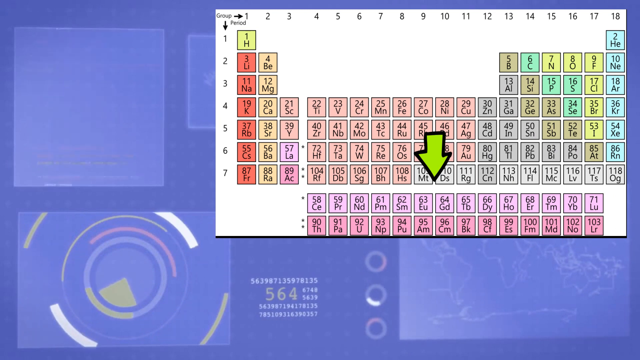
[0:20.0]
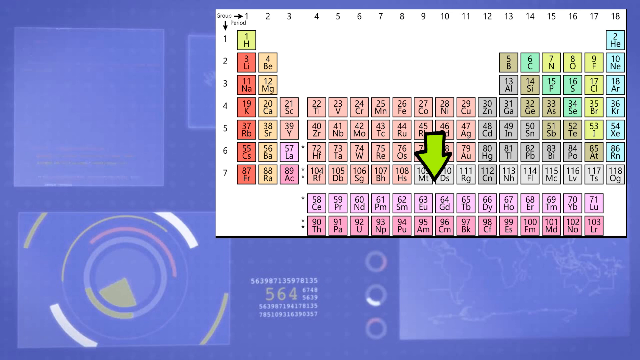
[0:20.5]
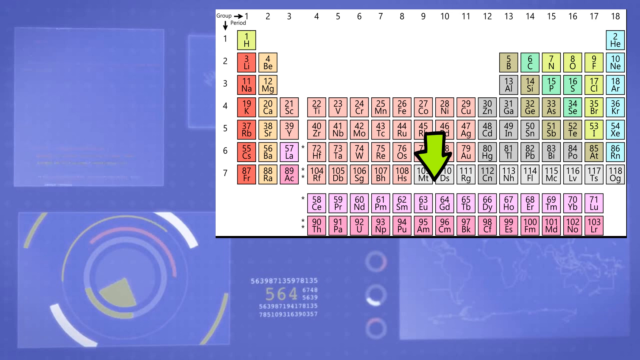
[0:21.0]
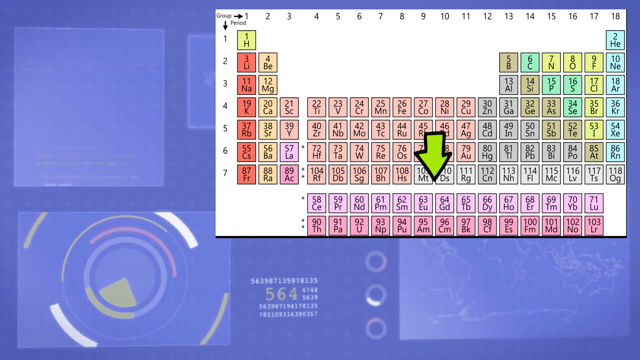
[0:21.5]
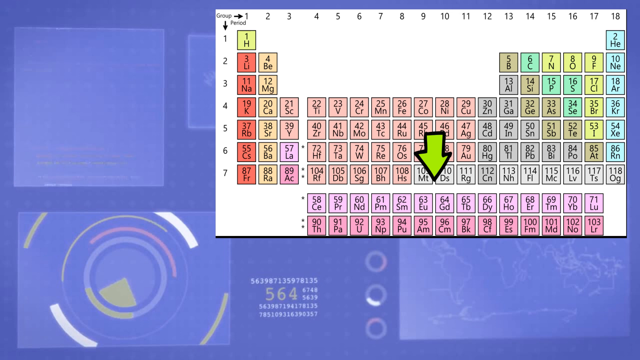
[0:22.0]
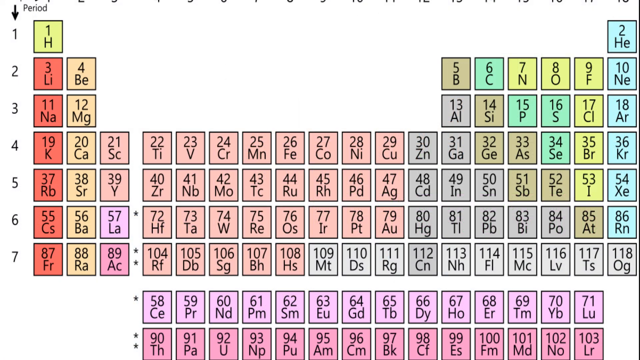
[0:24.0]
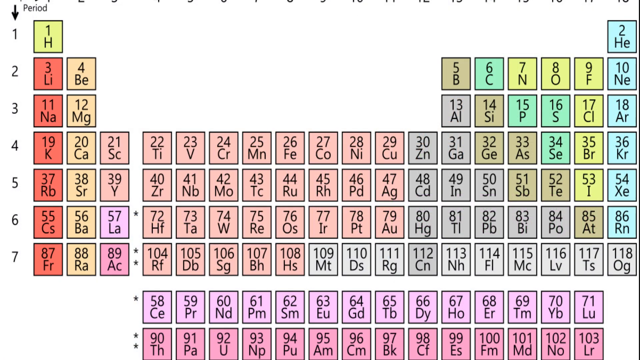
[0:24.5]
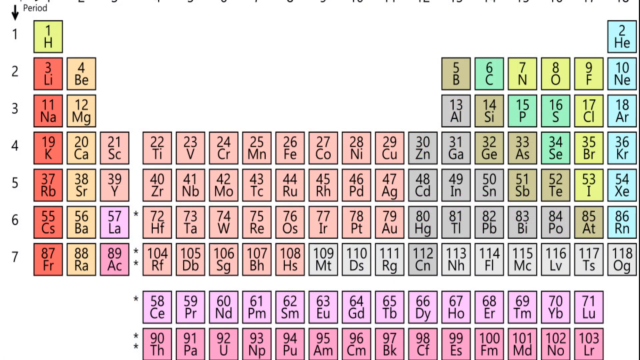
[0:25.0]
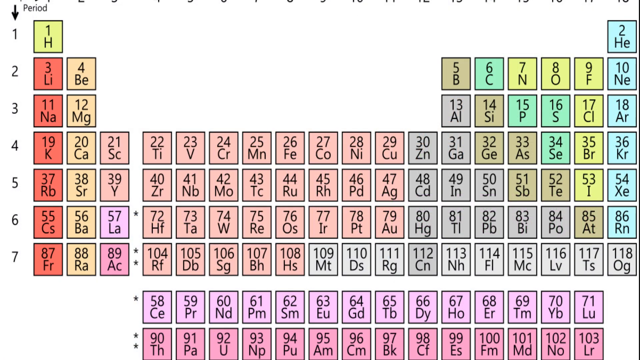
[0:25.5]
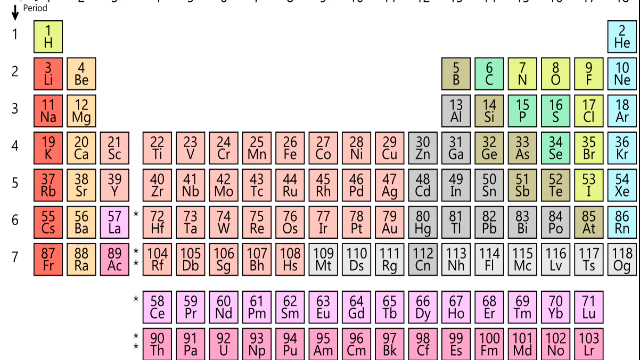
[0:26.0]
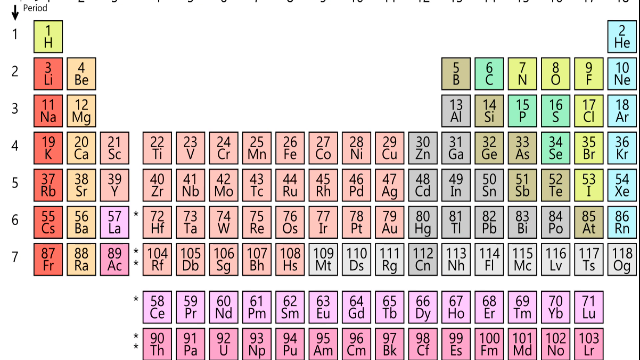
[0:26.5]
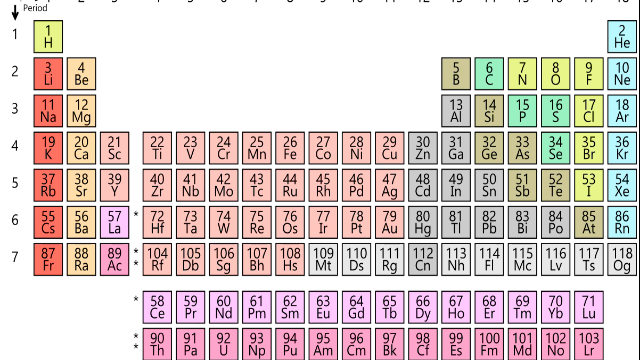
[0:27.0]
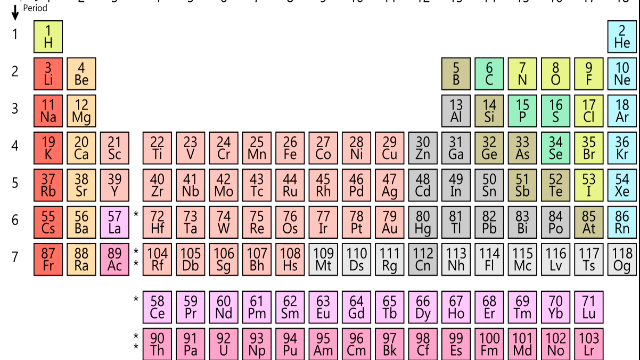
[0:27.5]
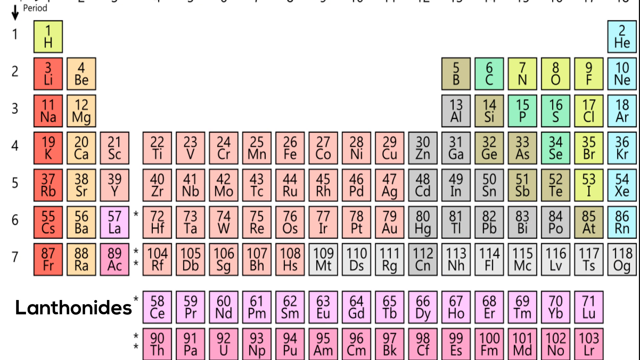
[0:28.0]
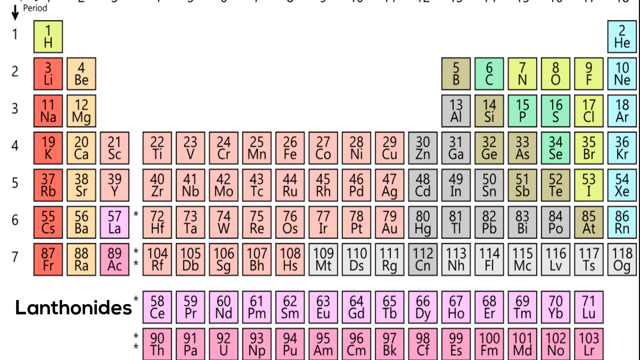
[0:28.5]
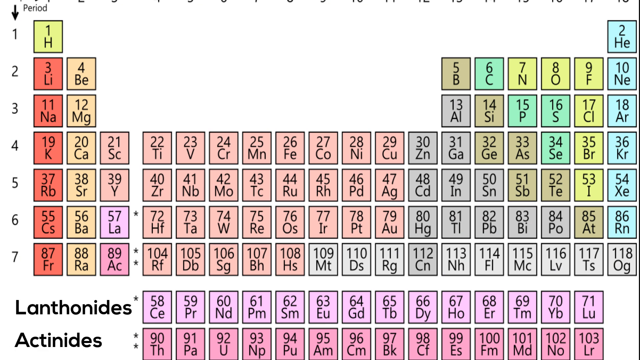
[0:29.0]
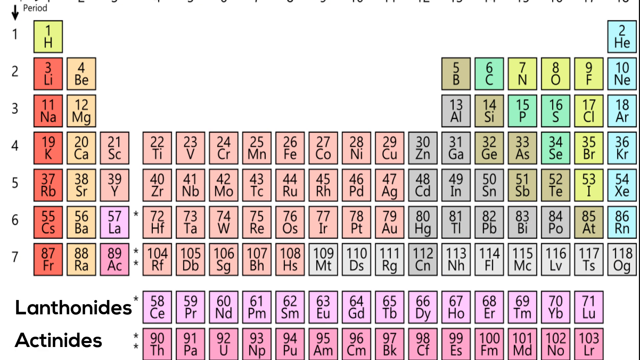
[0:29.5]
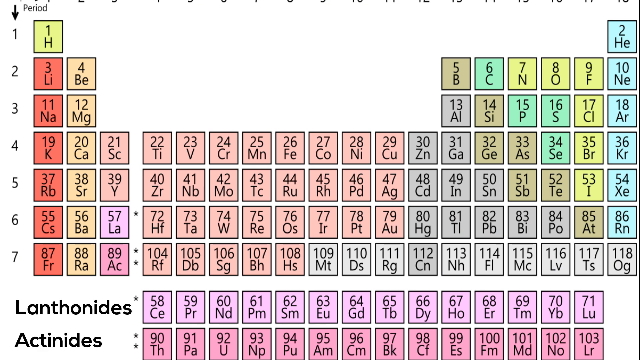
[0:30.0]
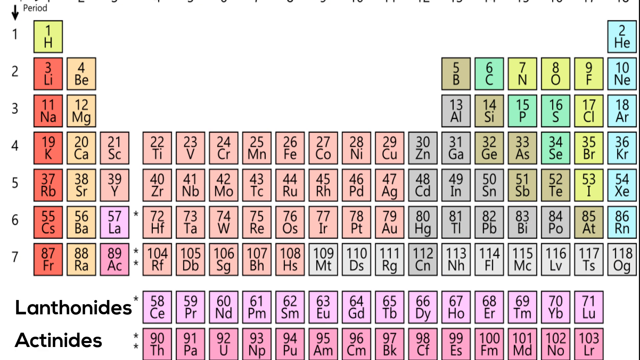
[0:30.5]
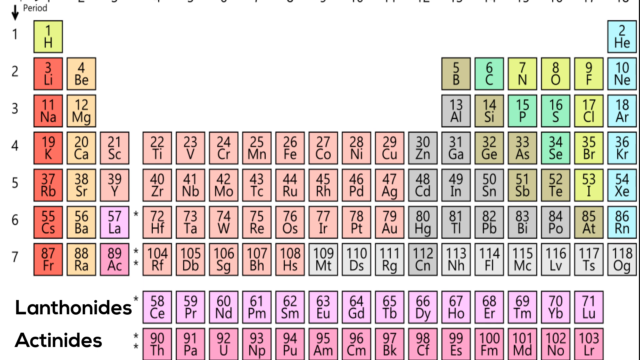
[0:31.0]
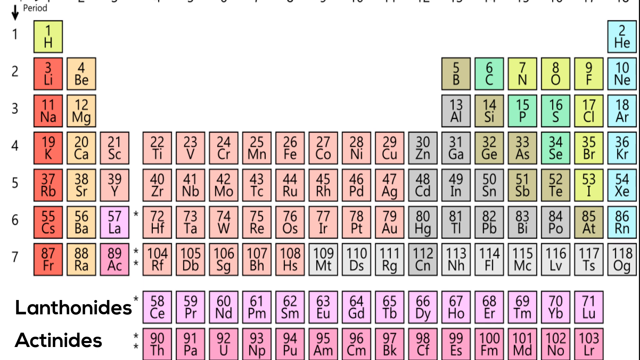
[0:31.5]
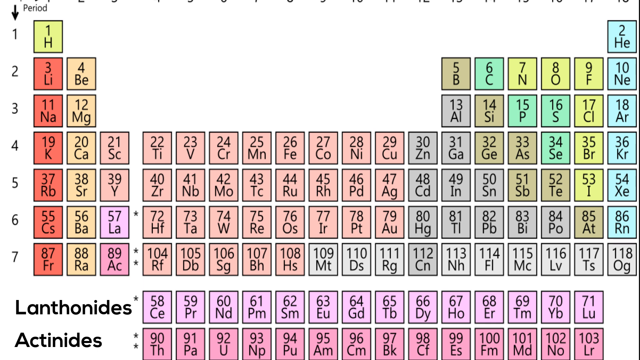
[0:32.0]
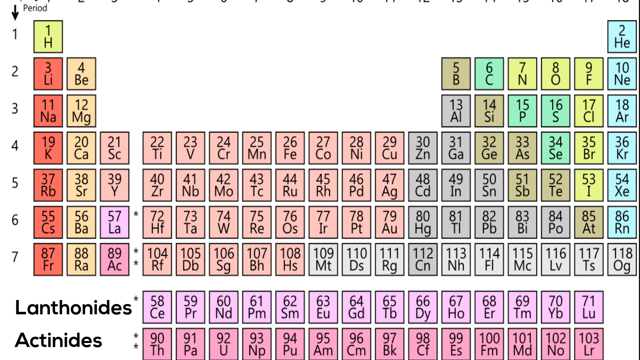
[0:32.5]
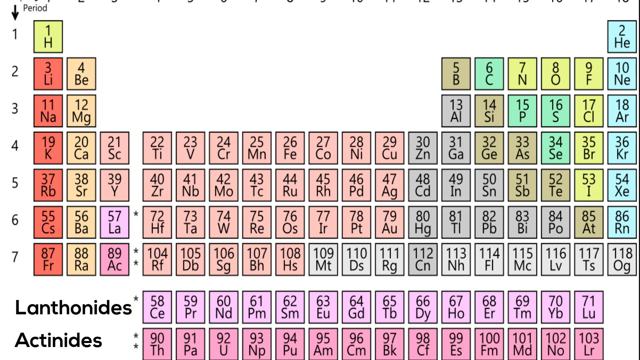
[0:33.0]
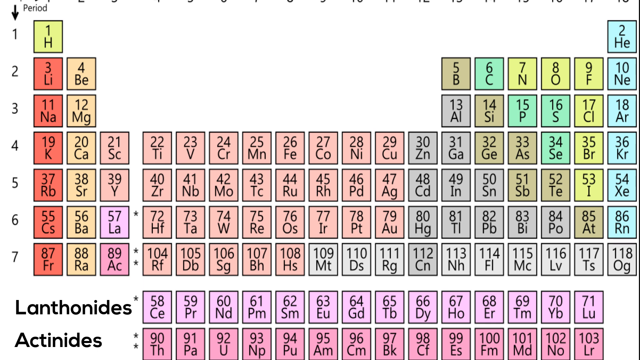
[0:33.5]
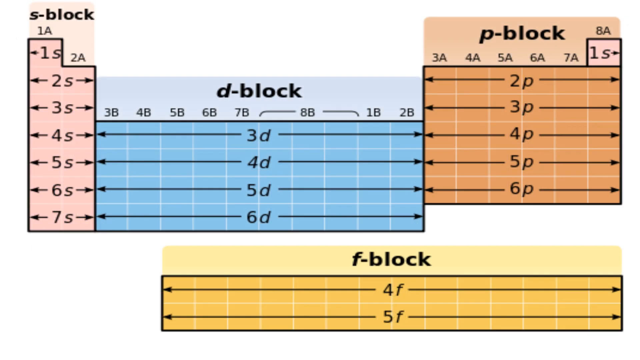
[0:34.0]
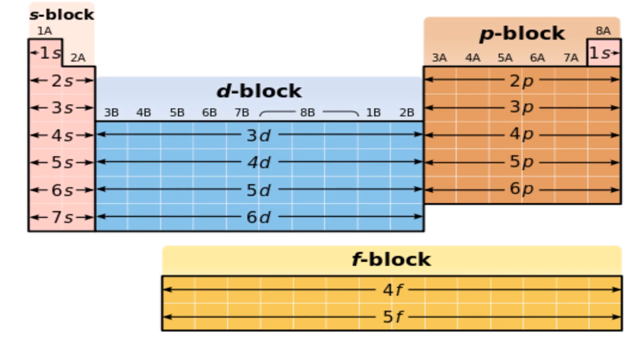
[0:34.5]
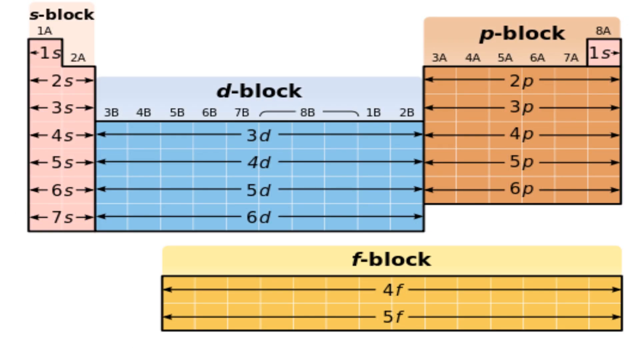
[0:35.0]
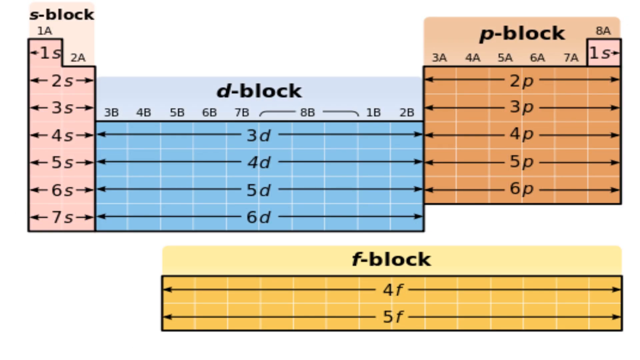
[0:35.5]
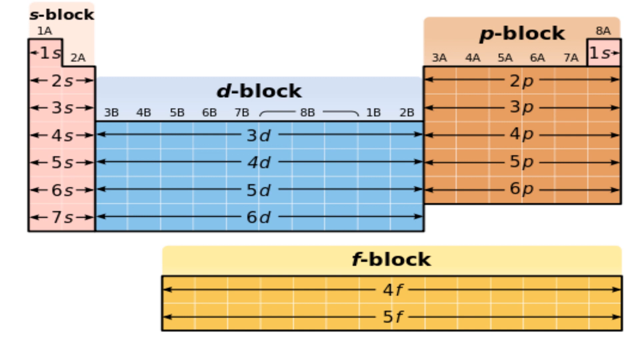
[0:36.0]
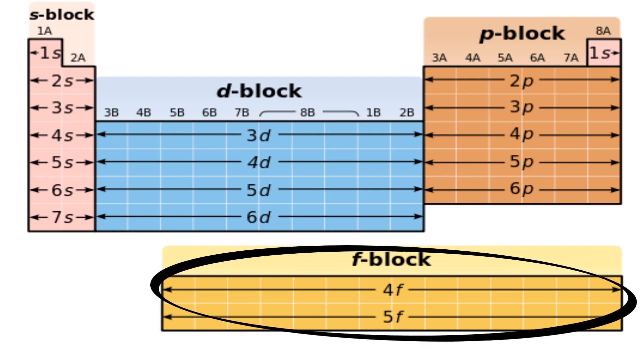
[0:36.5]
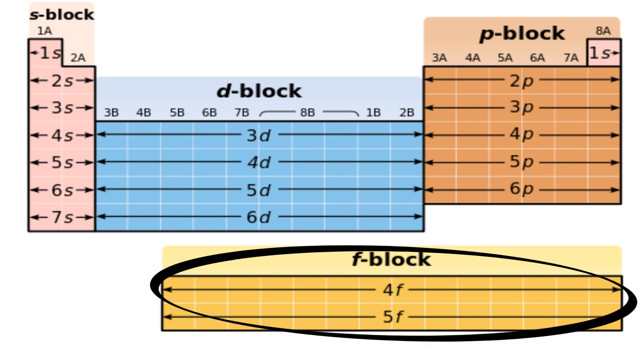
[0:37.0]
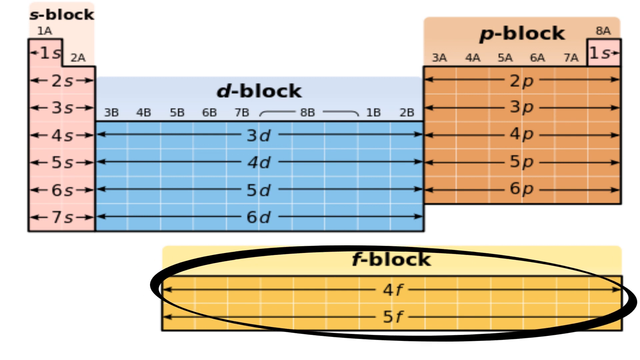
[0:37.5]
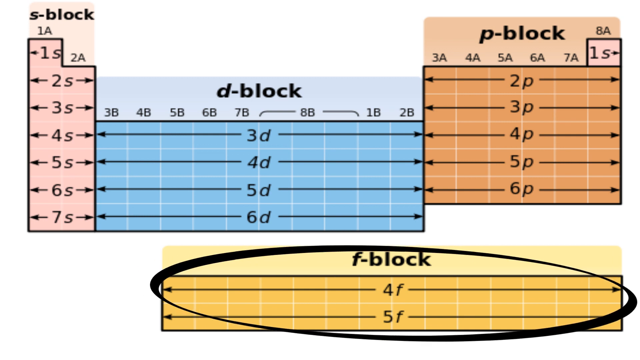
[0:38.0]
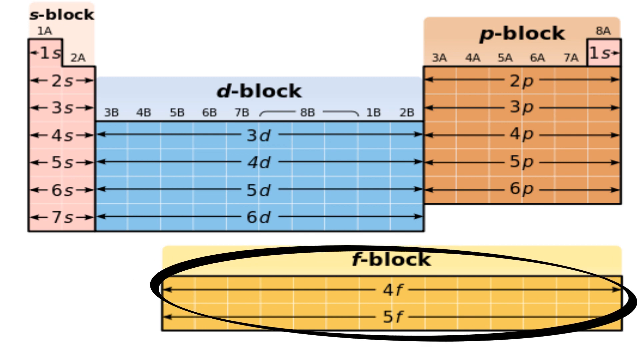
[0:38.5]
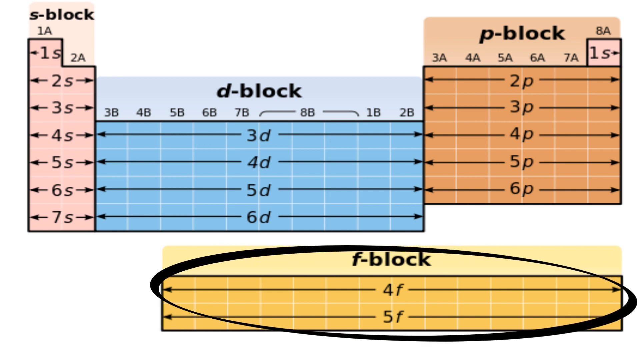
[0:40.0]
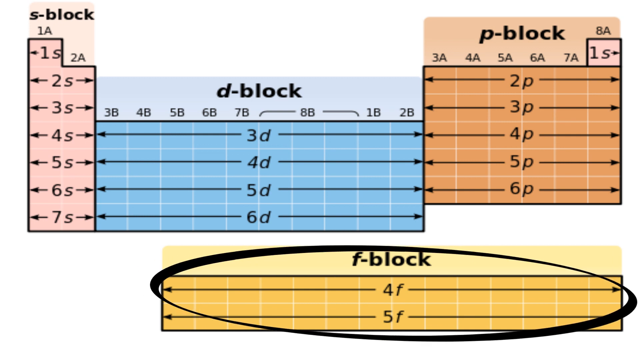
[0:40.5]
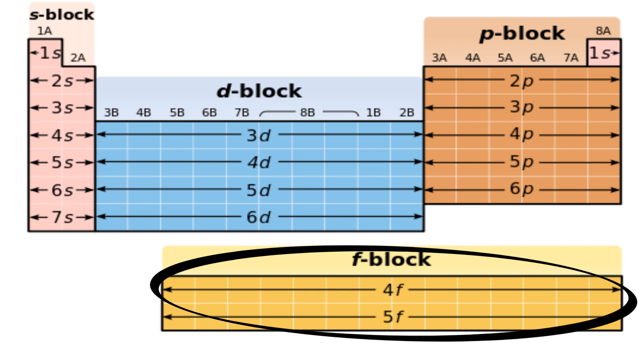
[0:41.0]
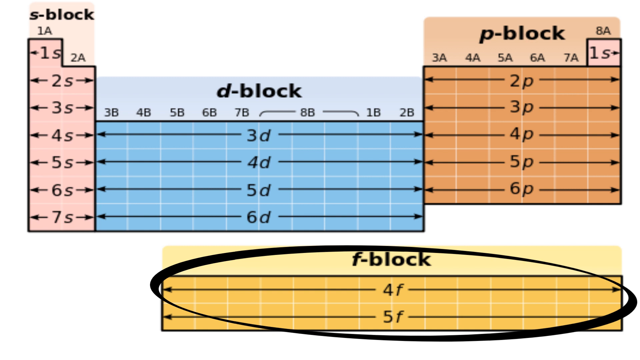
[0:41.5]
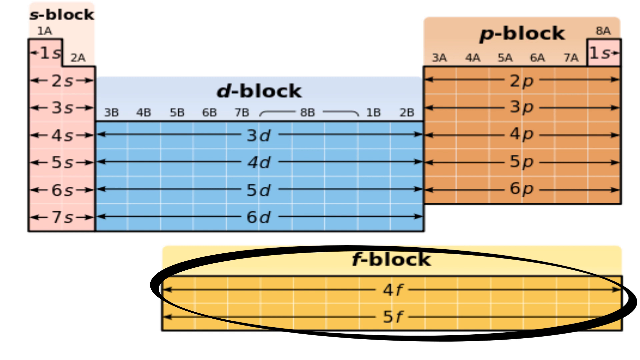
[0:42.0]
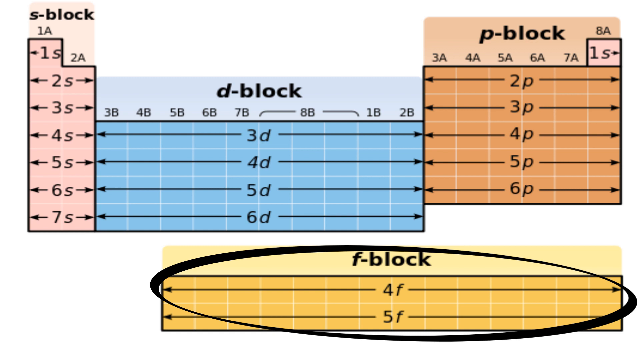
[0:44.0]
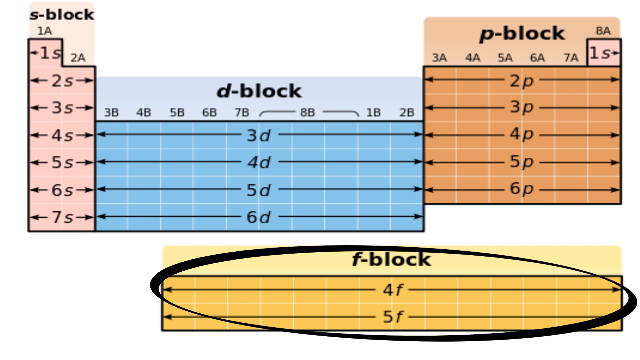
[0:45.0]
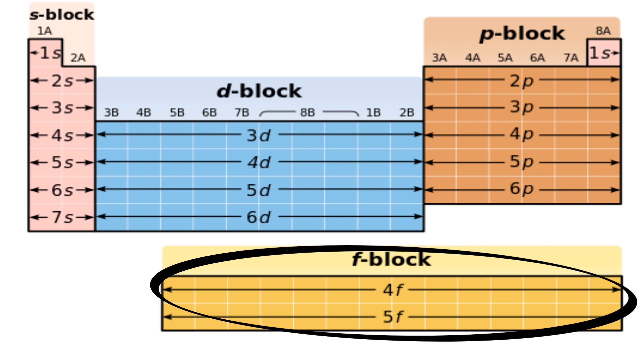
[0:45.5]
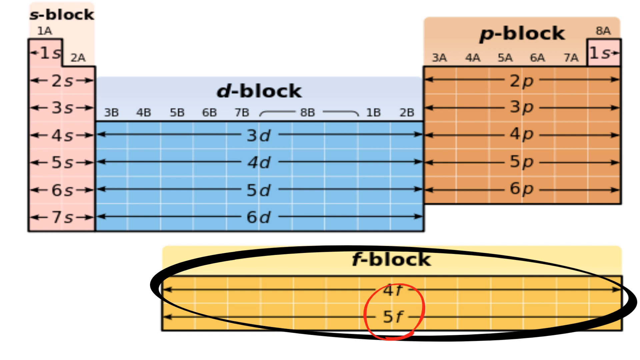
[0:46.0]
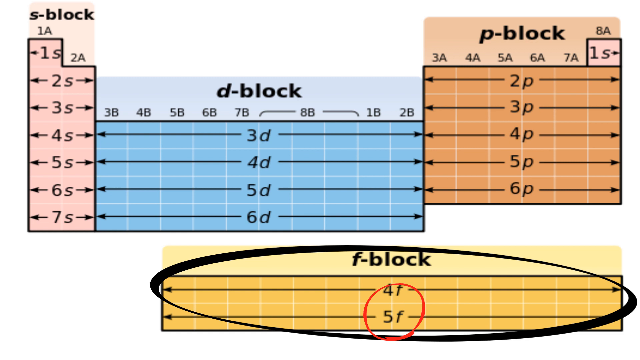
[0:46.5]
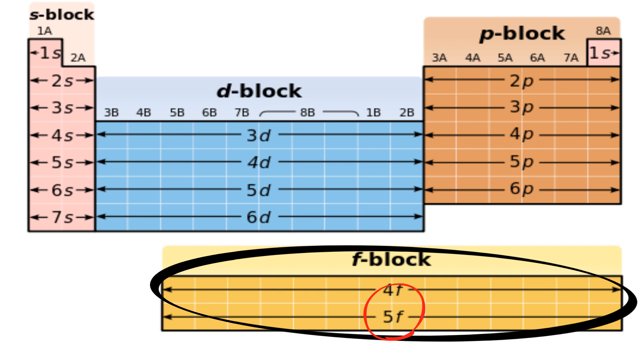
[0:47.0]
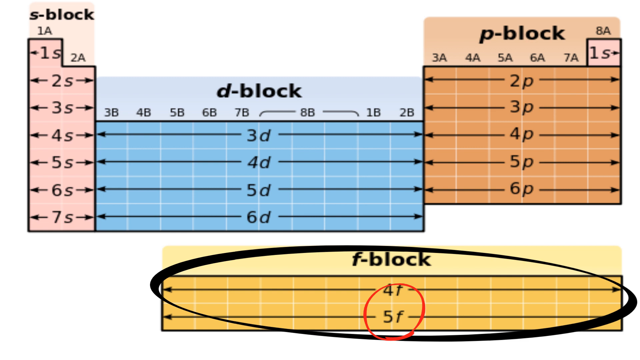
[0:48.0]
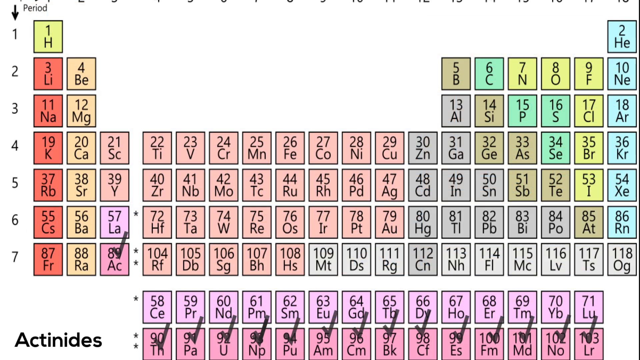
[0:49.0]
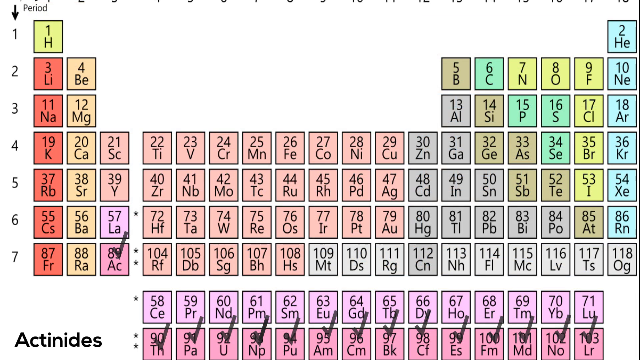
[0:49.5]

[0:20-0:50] After a while, the motion of the toxic drum animation stops completely and the periodic table picture stands still. The view zooms in on it for a much closer look, and two labels appear for the bottom rows: the upper of the bottom rows is labeled "lanthanides" and the bottom row "astin dis." The video then moves to a different picture showing the same setup as the periodic table, but now separated into different blocks. The bottom block is the F block, and it is circled with a black, sideways oval.